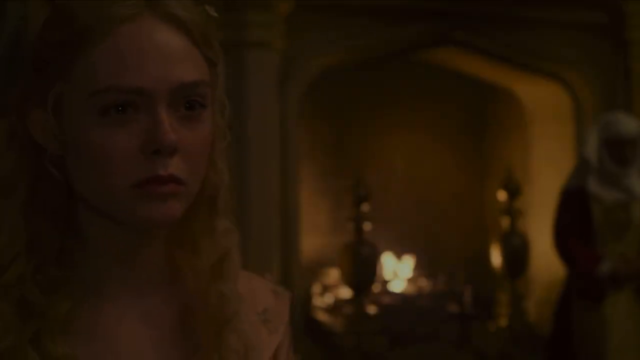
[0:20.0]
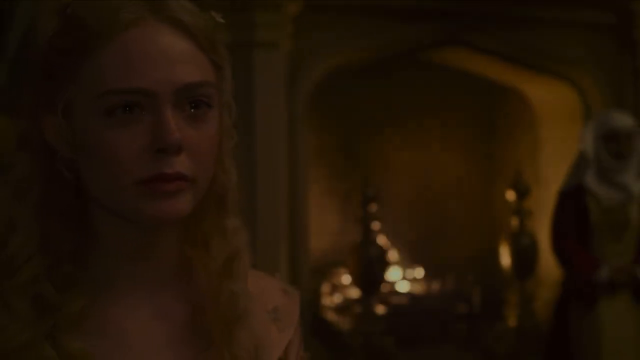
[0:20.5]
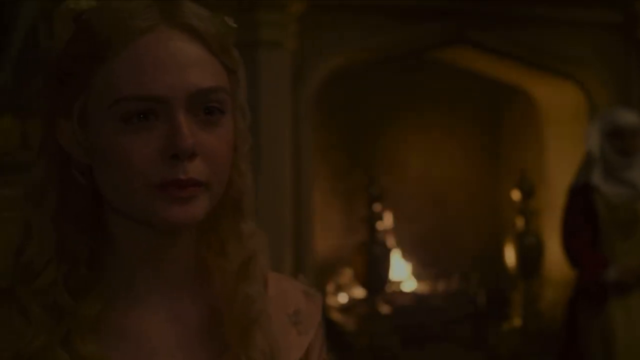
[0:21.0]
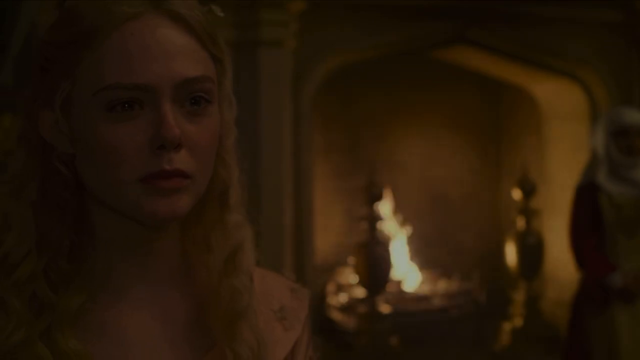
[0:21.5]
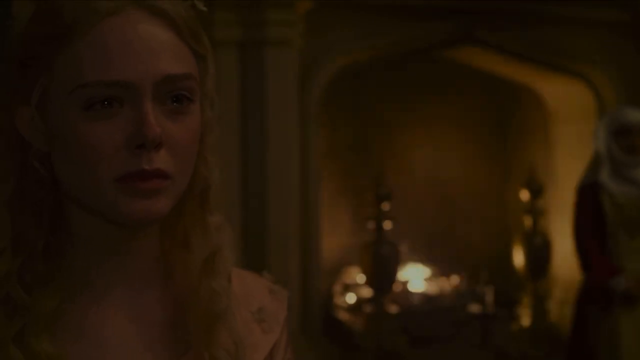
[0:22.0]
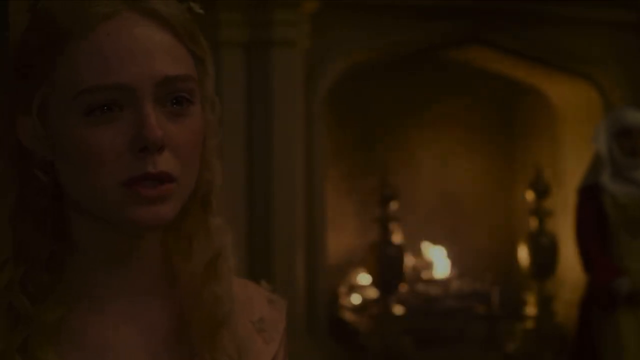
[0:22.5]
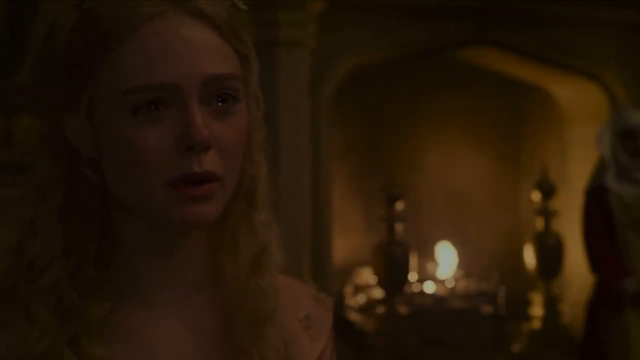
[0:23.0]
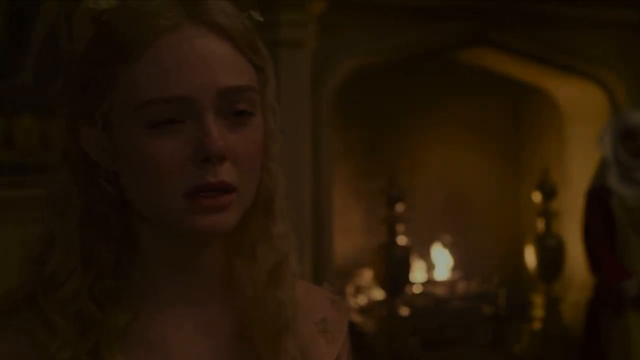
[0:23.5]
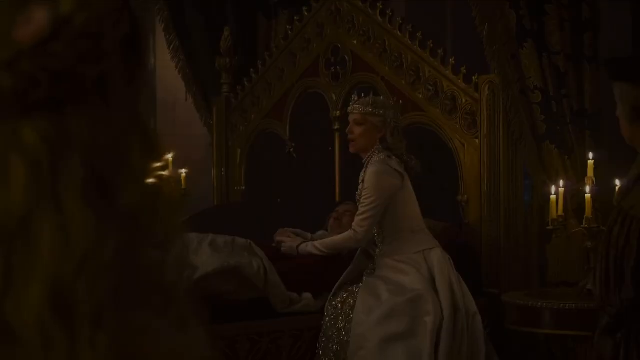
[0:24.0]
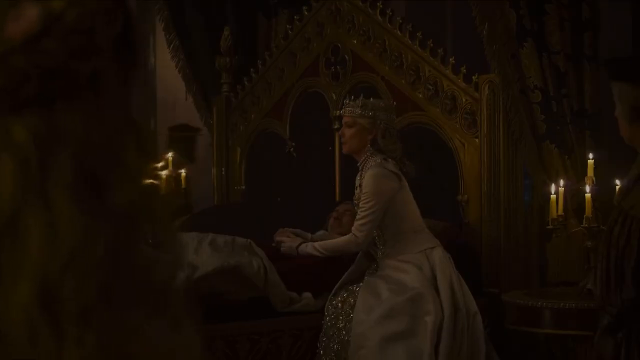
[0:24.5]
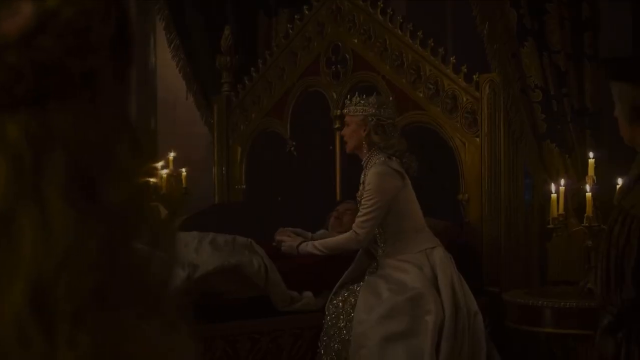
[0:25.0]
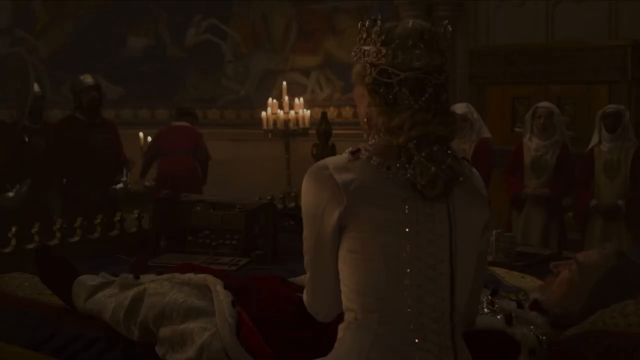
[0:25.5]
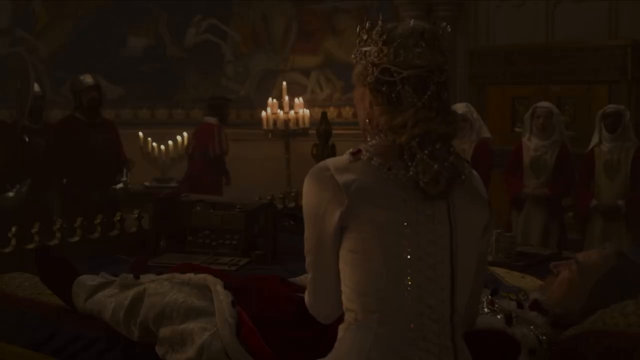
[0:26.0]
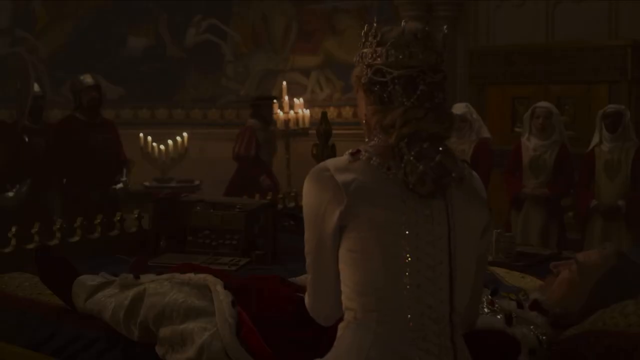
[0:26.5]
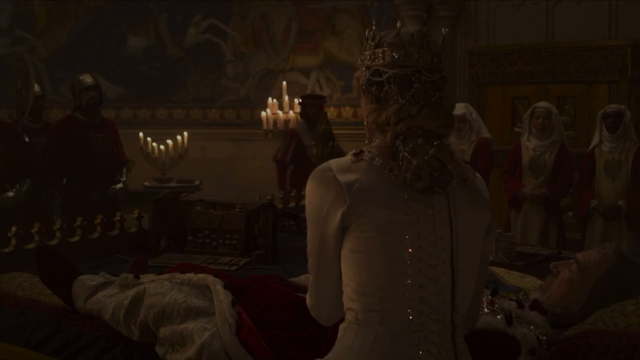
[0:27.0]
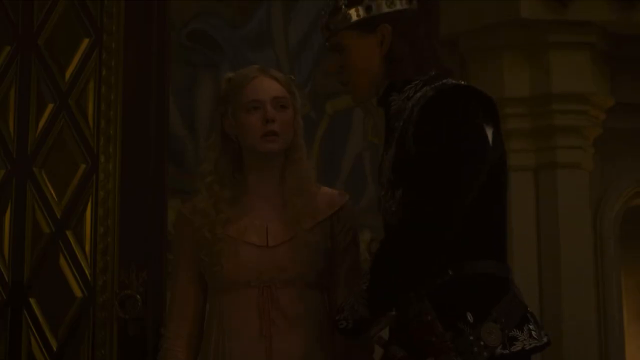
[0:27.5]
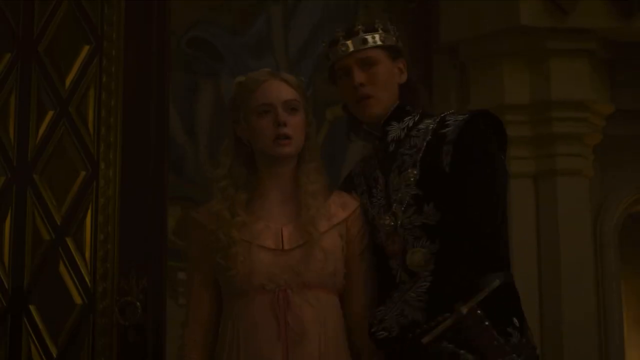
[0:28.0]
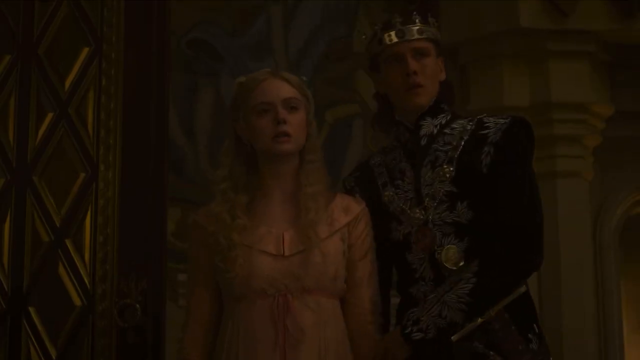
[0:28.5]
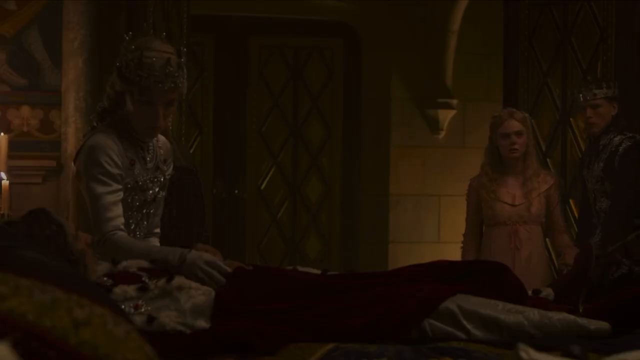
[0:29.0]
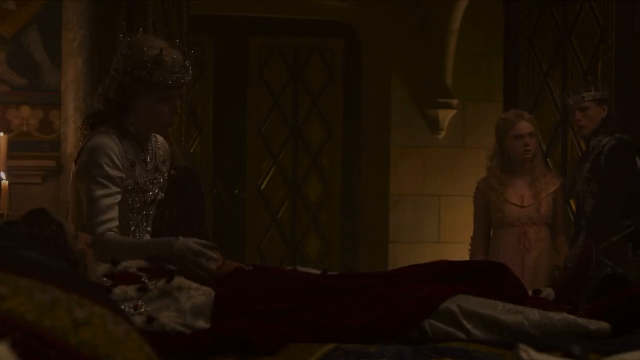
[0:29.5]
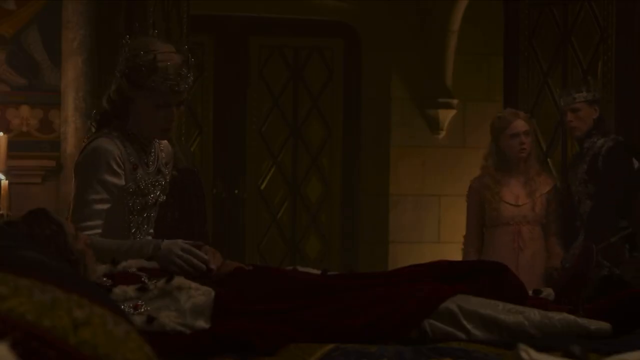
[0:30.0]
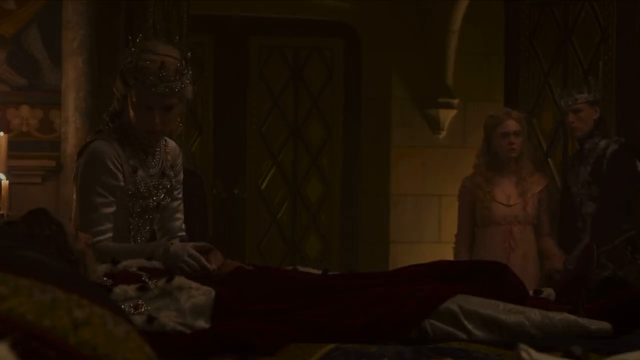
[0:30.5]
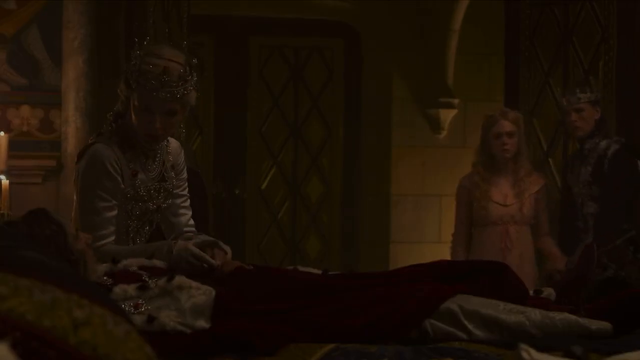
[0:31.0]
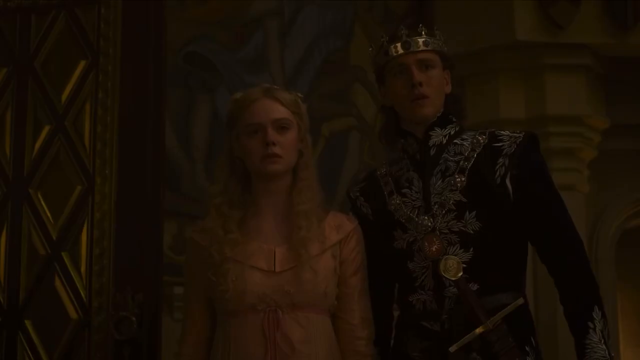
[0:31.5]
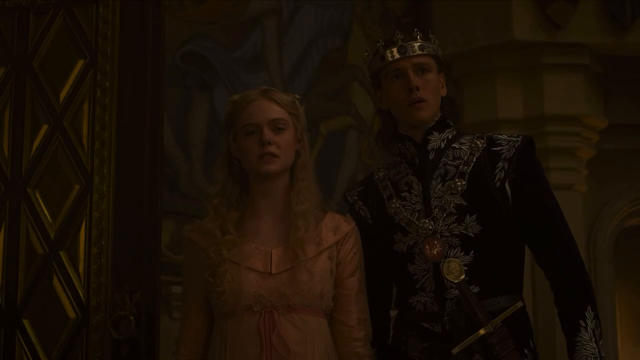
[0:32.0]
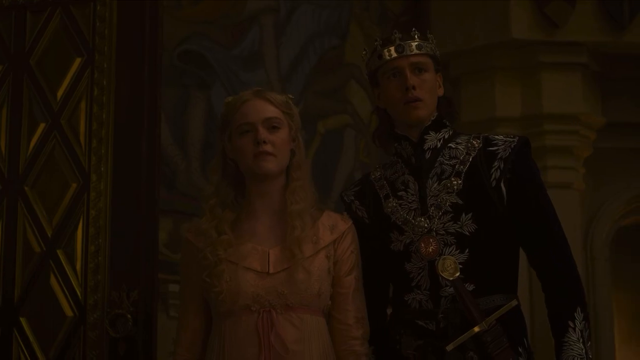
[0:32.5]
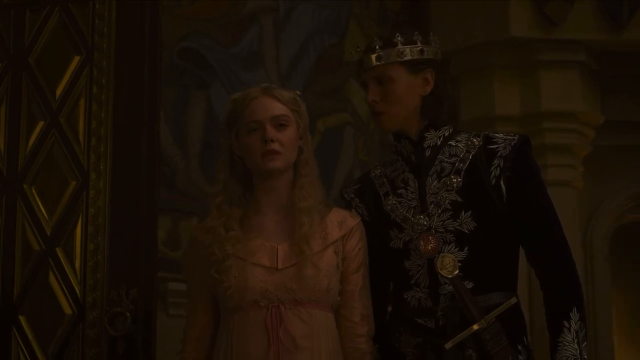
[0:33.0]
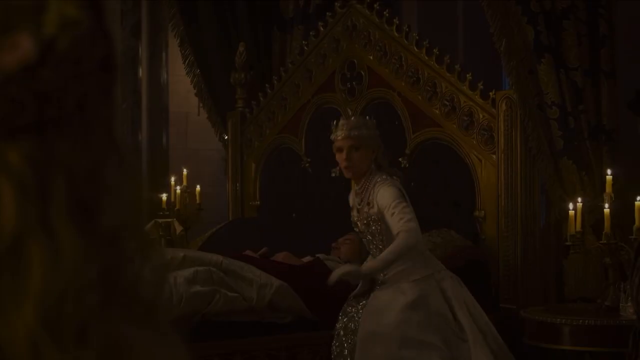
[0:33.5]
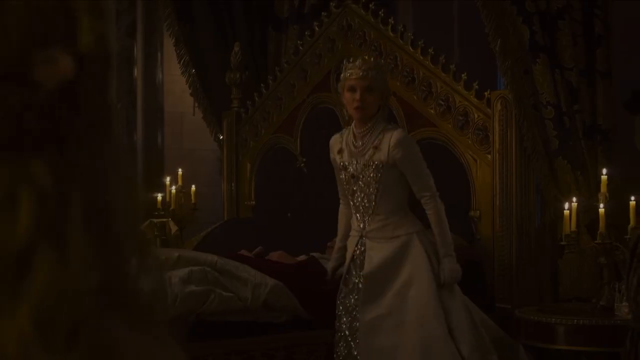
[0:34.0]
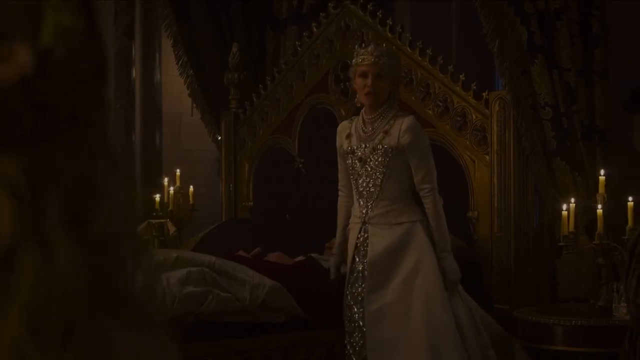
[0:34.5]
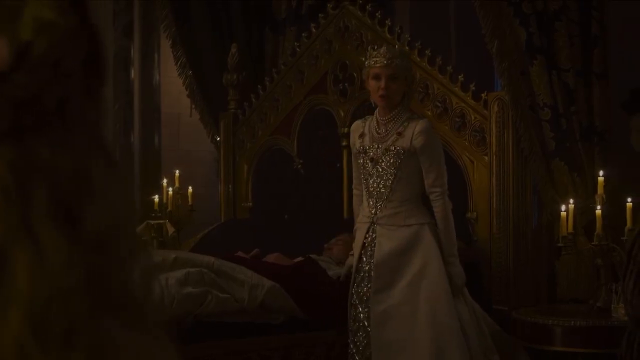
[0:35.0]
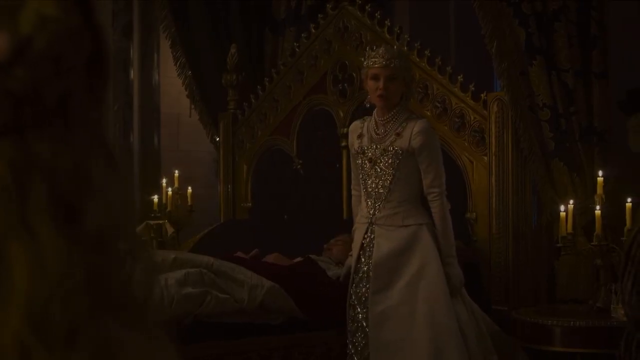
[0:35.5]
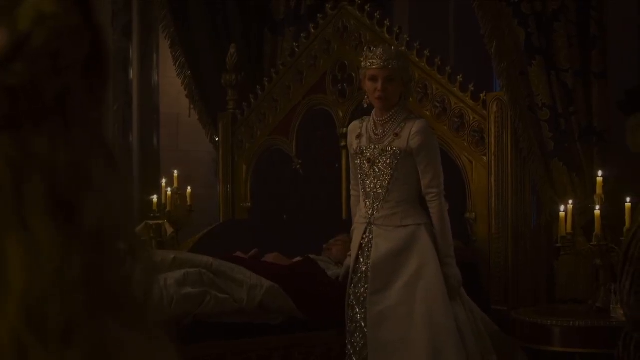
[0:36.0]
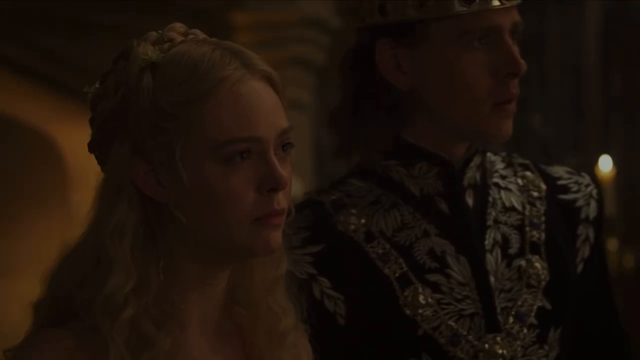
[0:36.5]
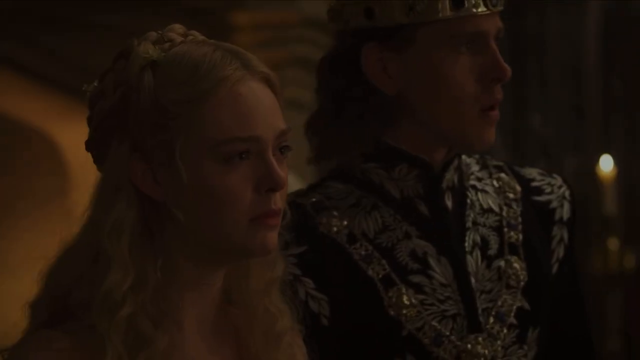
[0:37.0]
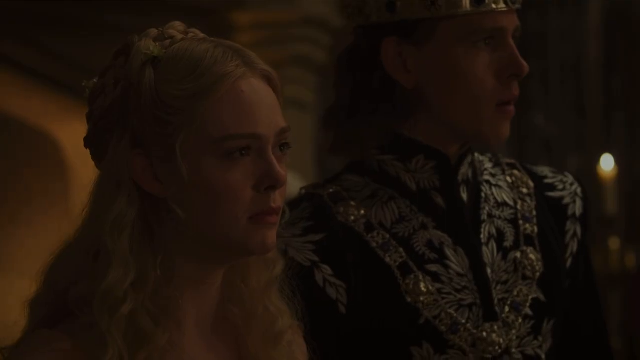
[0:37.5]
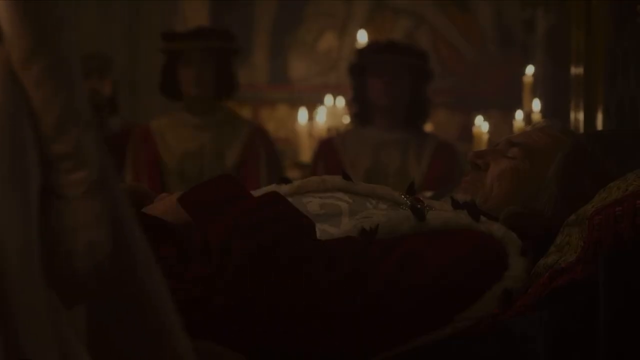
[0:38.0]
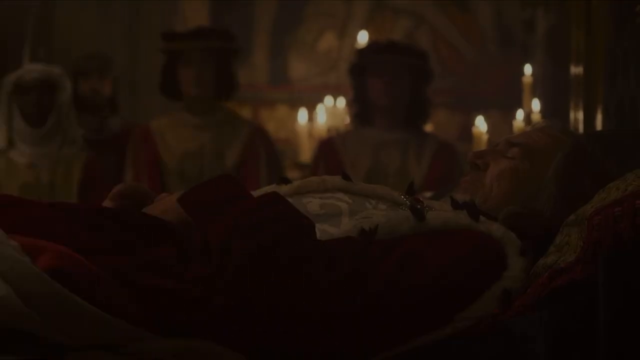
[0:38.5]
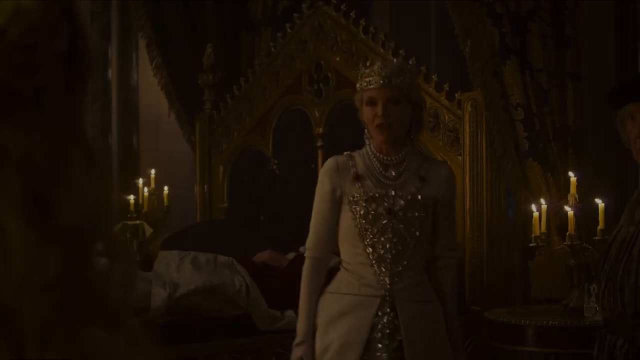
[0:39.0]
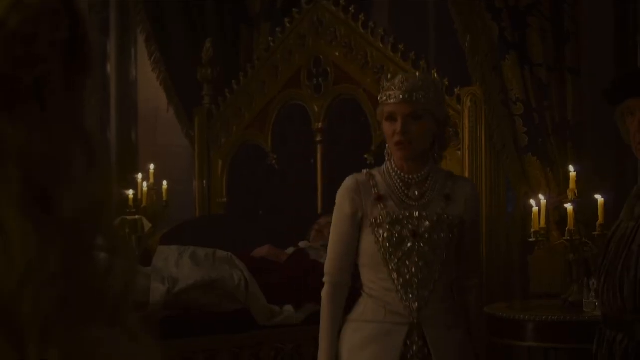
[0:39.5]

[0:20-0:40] A woman is crying while the king suffers. A king comes to stand by her side to comfort her, and a queen mother comes to her to speak comforting words. There are lights all around. The woman has blonde hair, a black eye and a pretty face. The soldiers, kinsmen and queen mothers all look worried, and it is a disturbing moment at the palace.